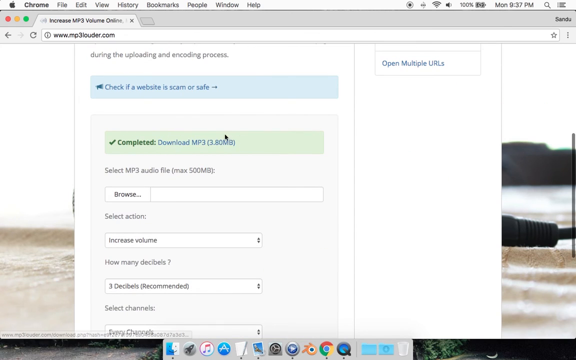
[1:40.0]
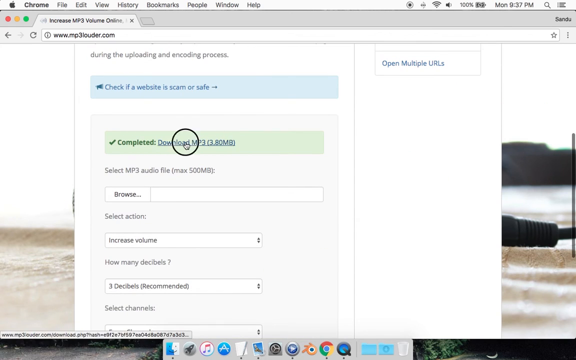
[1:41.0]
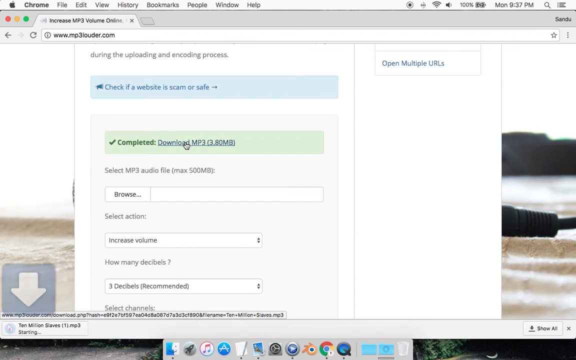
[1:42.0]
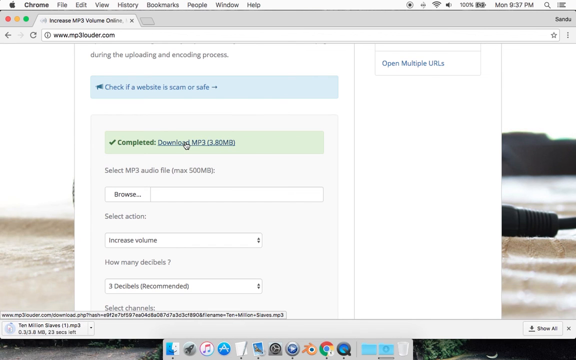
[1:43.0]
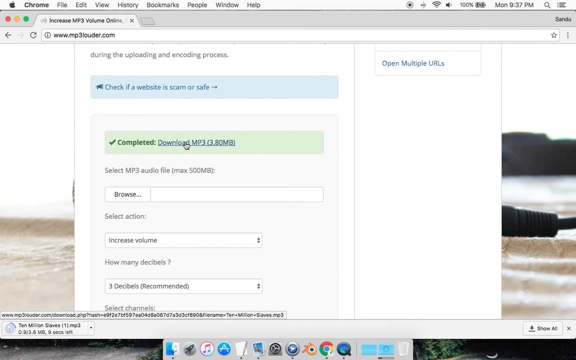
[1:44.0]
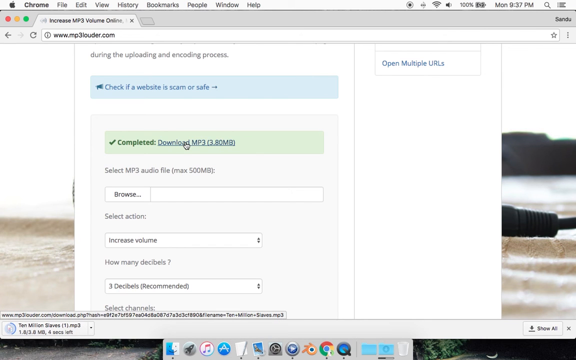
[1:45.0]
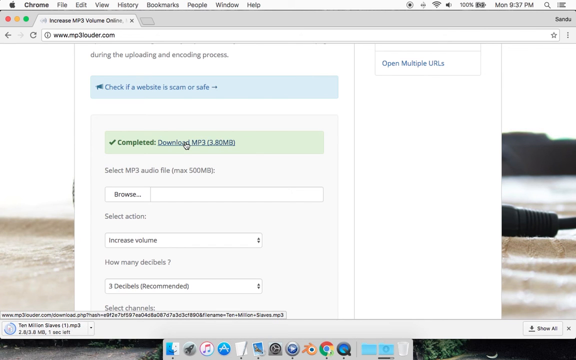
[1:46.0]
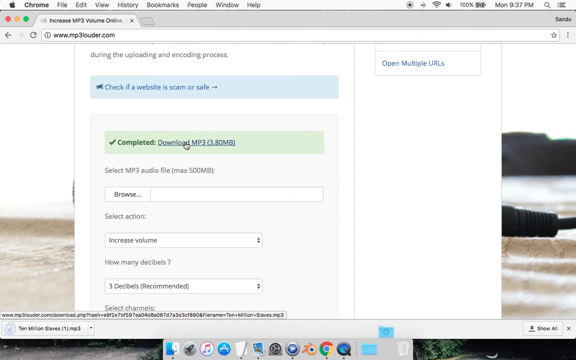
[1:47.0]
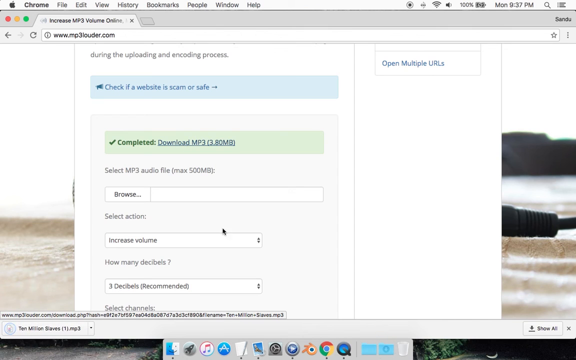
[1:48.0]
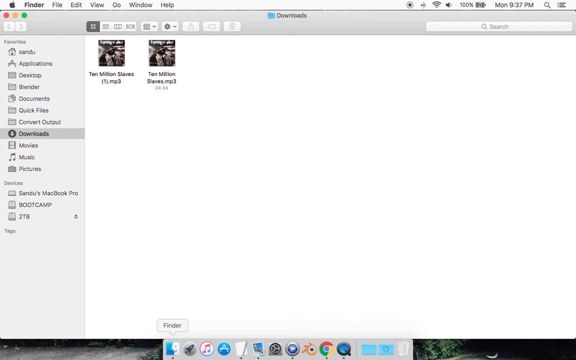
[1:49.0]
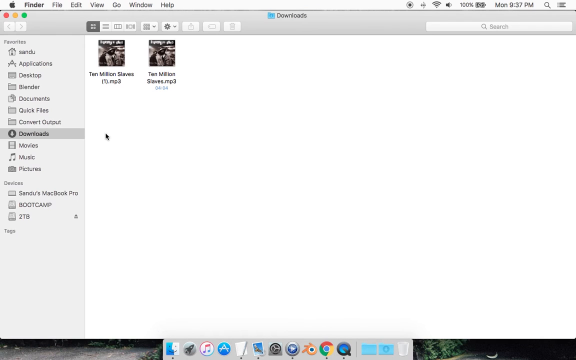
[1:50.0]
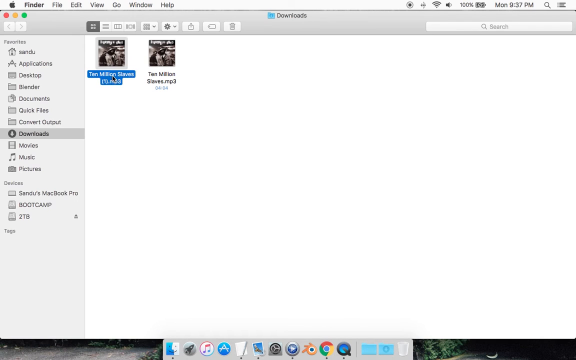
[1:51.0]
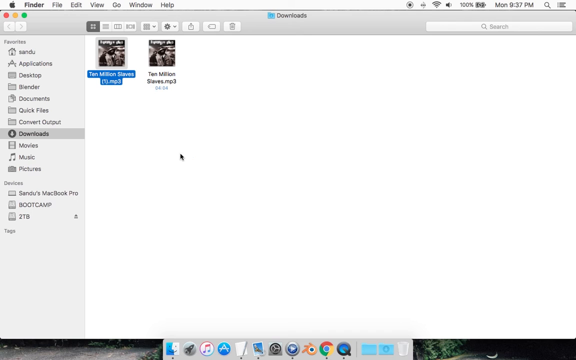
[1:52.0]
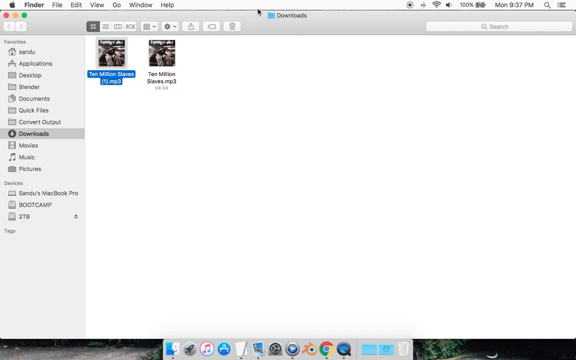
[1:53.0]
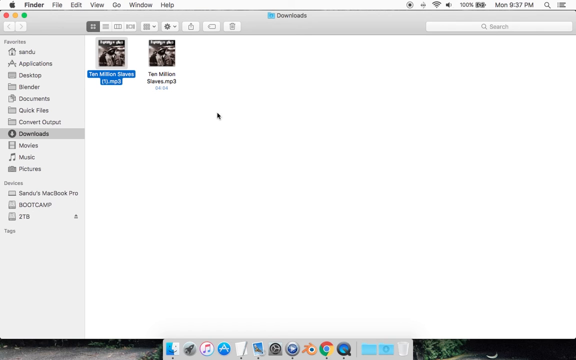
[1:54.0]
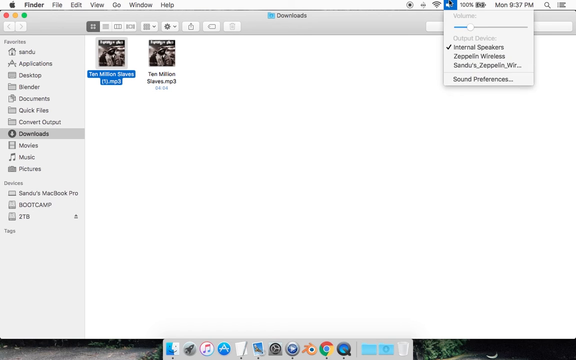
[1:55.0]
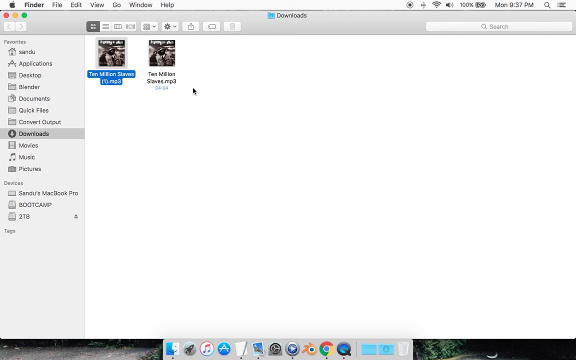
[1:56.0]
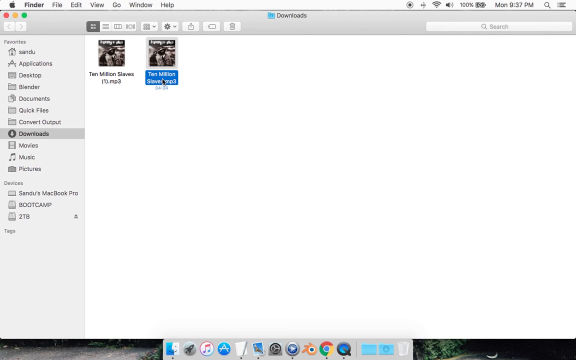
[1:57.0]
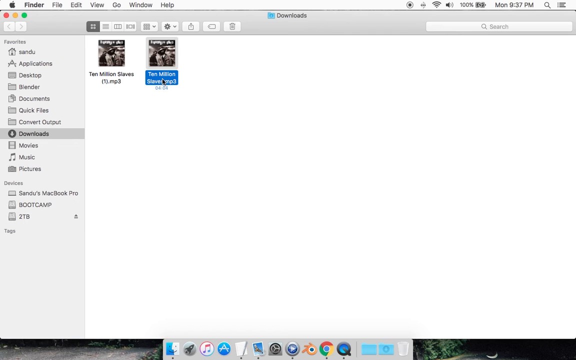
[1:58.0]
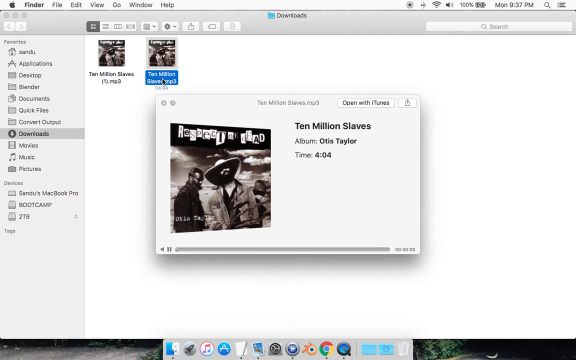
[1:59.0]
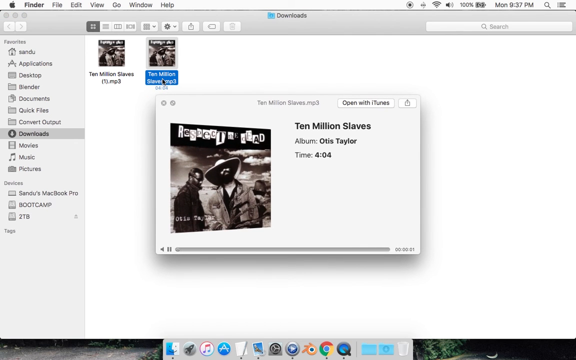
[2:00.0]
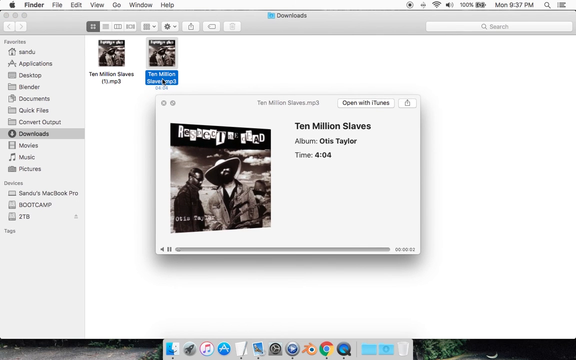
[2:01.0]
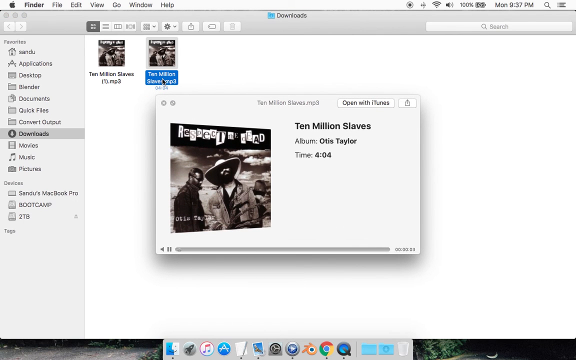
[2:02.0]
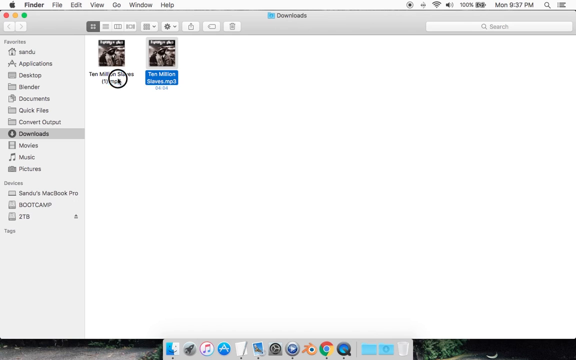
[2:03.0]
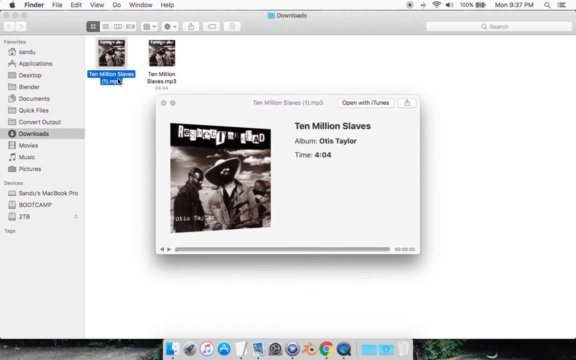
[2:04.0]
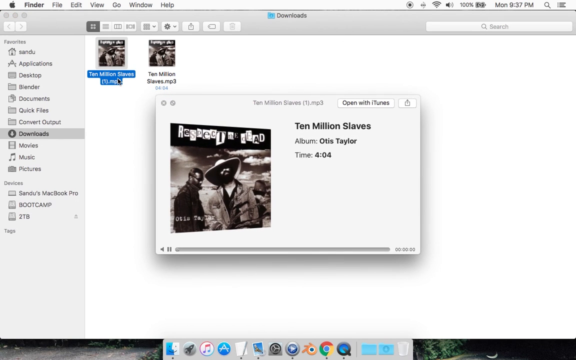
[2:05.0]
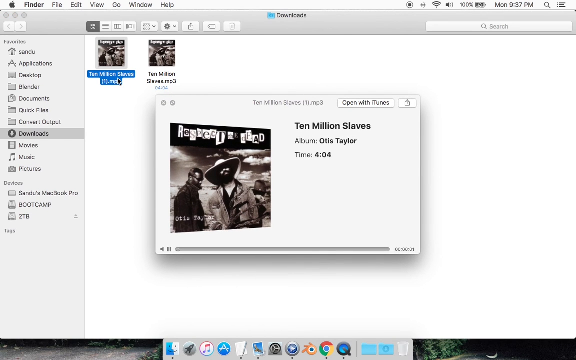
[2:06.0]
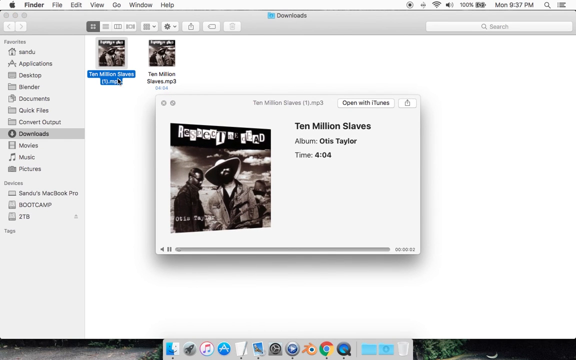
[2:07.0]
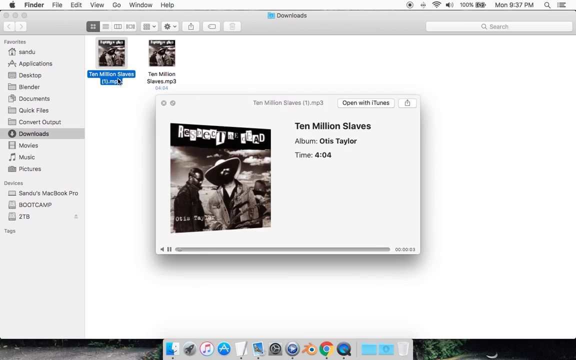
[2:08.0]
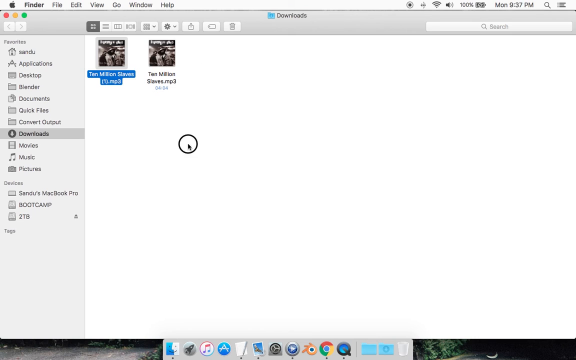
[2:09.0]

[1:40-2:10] The mp3louder.com website shows the completed message for the just-uploaded mp3, along with the link to download it. The user clicks the link, and at the bottom of the Safari browser the download of the file is shown with the word "starting". The download then begins, showing how many MBs are left and how much time remains. The user goes to the Finder icon on the bottom menu of the desktop, which brings up a downloads folder window now containing two files, both named "10millionslaves.mp3"; one is a duplicate of the first, with a number one in parentheses after the file name. The user clicks the duplicate file, then goes to the top of the screen, clicks the volume button and increases the volume to about the halfway point. They then click the second file in the folder, the original 10 million slaves file, and a pop-up window appears showing the artwork, the name "10 million slaves", the album name and the duration, with a volume button, a pause button and a progress bar of how much of the song has played at the bottom. The user exits that window and clicks the first file, the duplicate, bringing up another small pop-up window with pretty much the same information: the artwork, the title, the album name and the time duration, plus the play button and progress bar below. They then close that window.